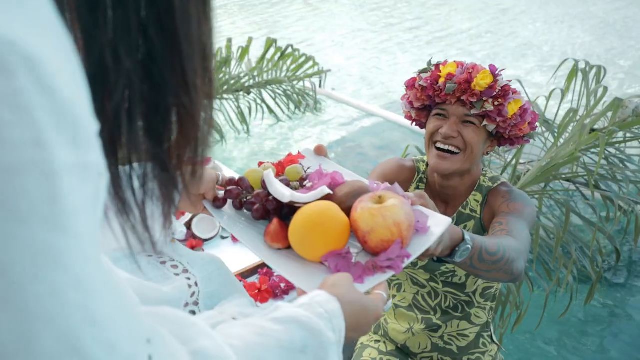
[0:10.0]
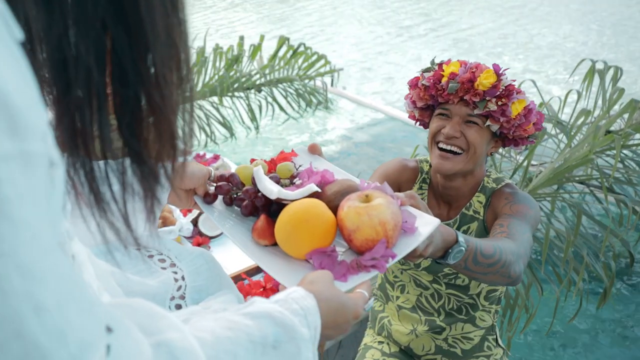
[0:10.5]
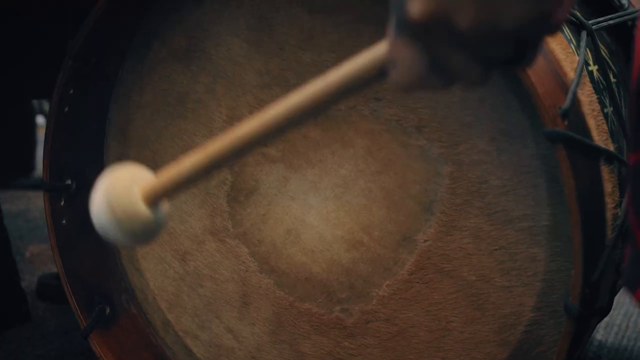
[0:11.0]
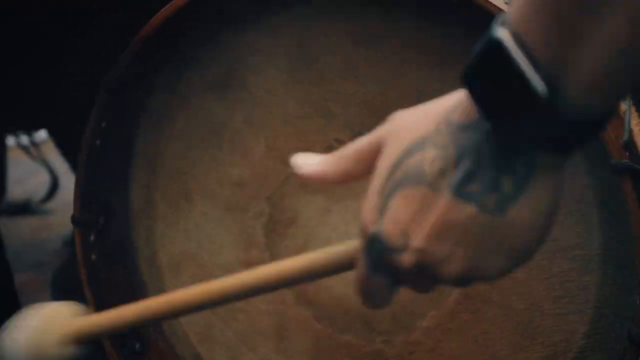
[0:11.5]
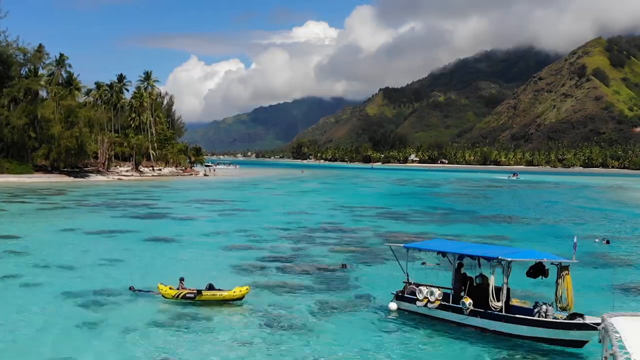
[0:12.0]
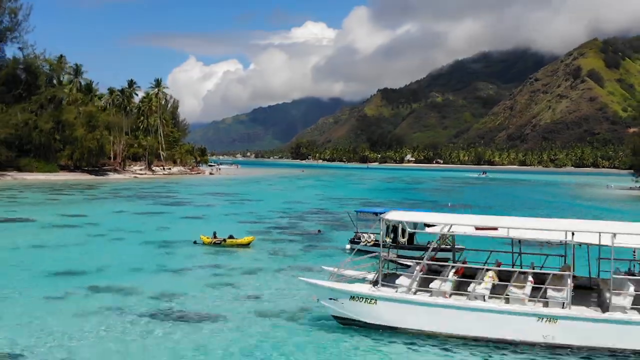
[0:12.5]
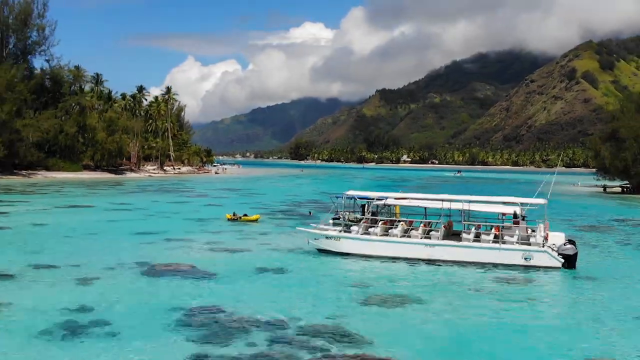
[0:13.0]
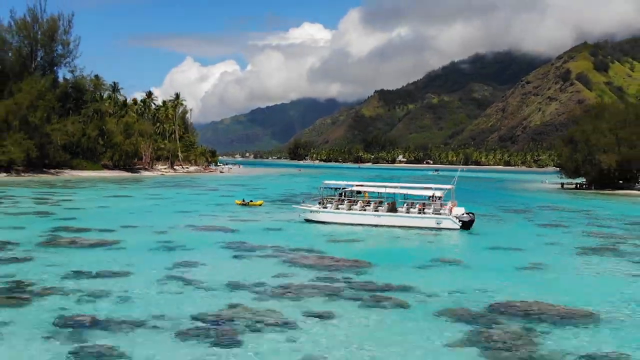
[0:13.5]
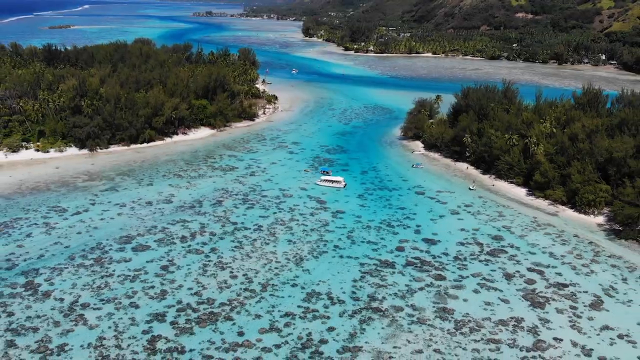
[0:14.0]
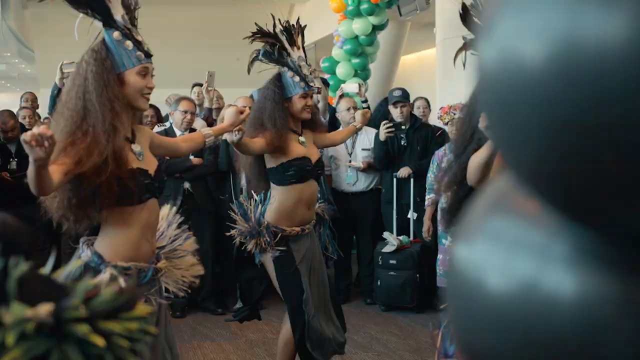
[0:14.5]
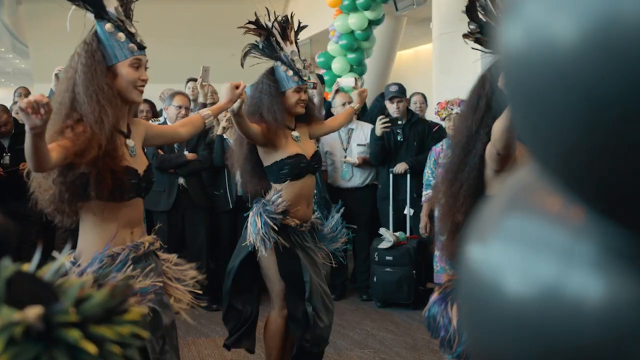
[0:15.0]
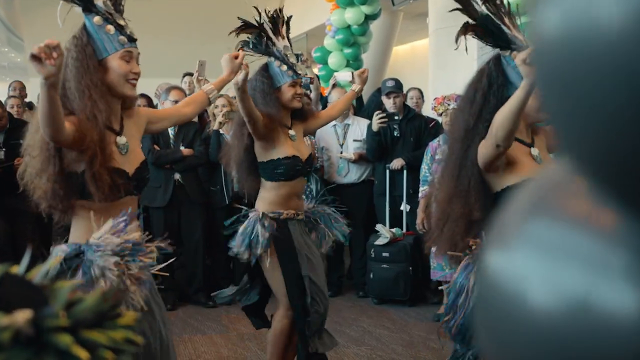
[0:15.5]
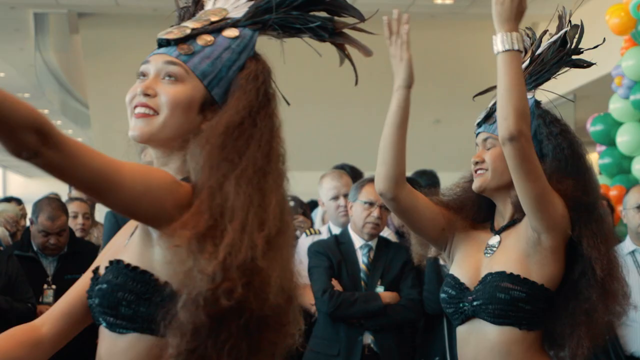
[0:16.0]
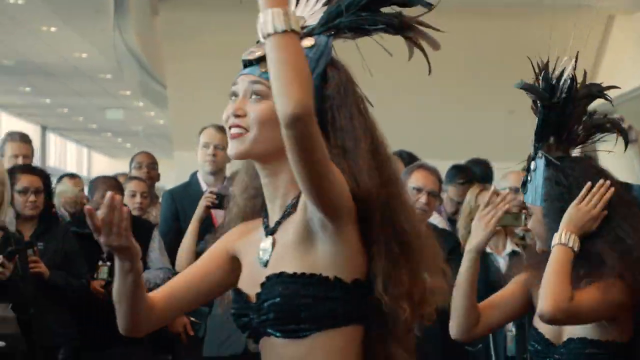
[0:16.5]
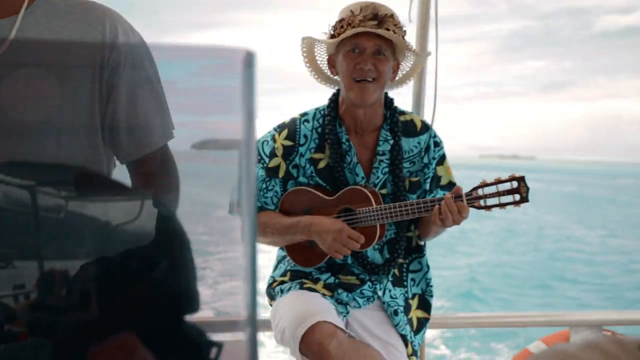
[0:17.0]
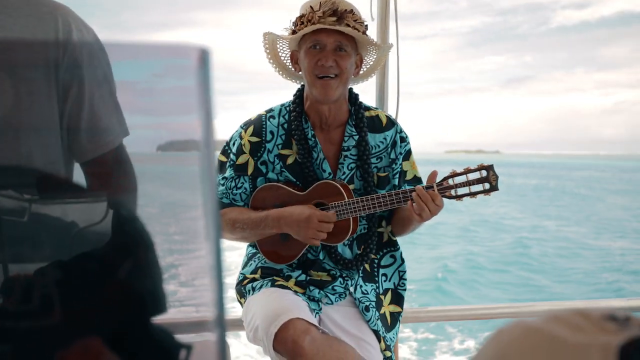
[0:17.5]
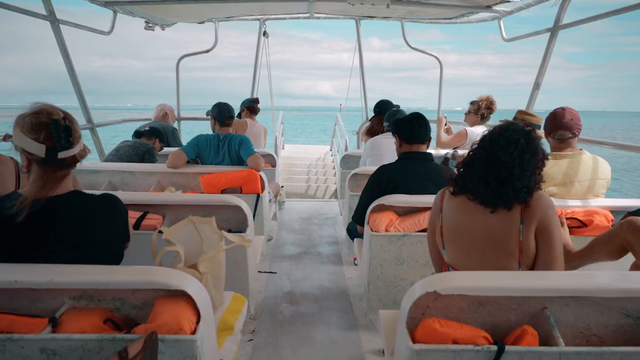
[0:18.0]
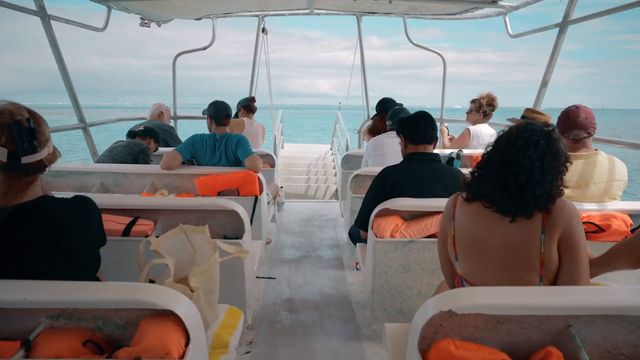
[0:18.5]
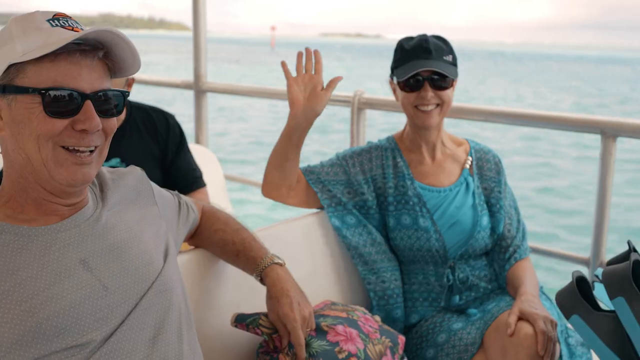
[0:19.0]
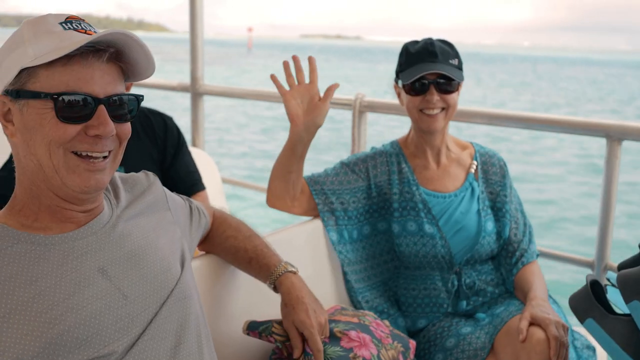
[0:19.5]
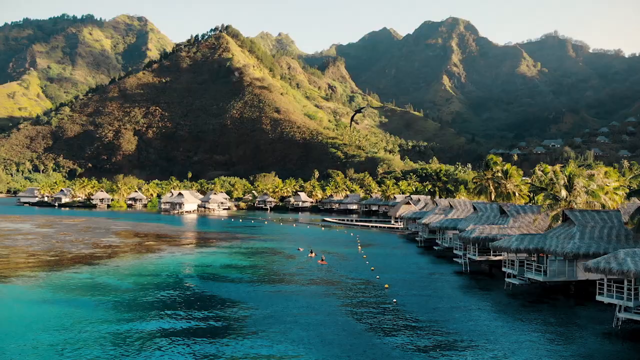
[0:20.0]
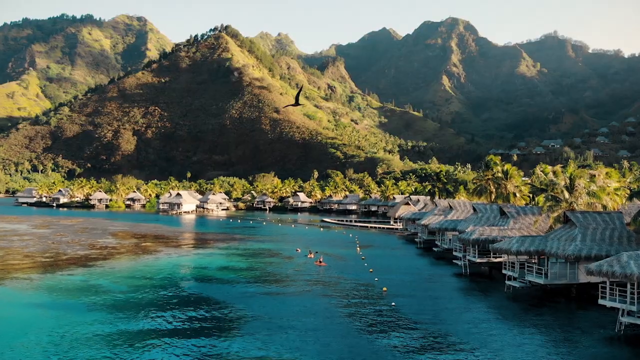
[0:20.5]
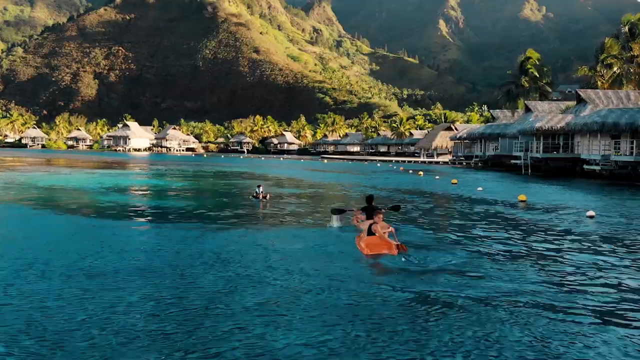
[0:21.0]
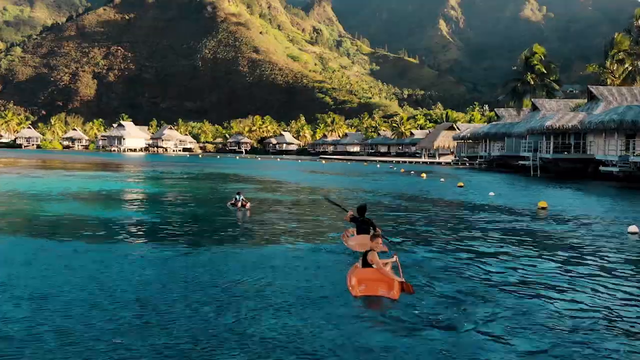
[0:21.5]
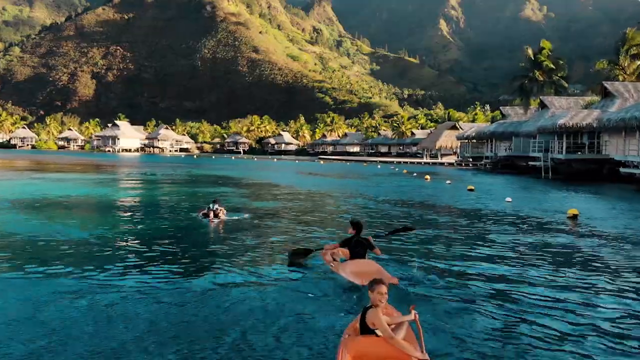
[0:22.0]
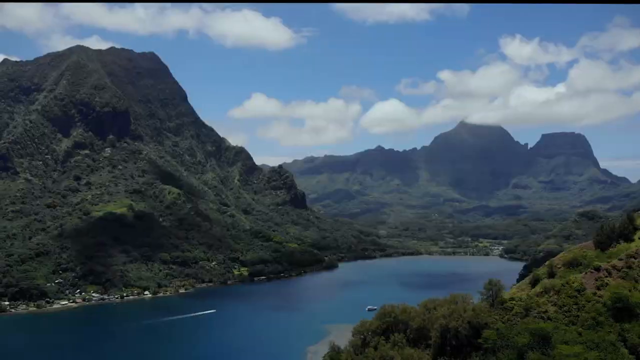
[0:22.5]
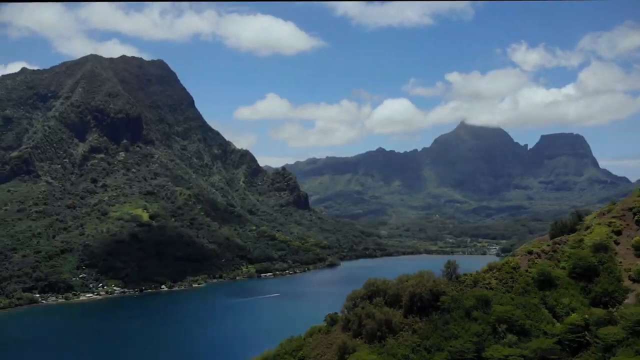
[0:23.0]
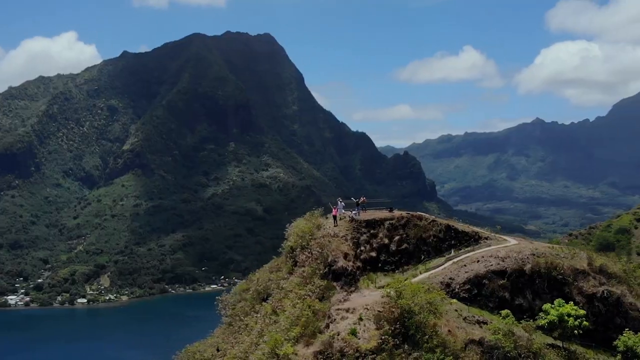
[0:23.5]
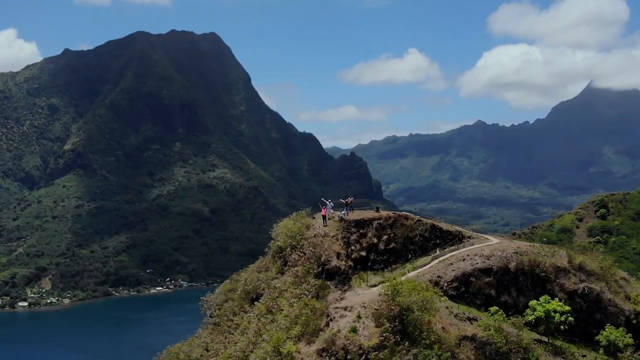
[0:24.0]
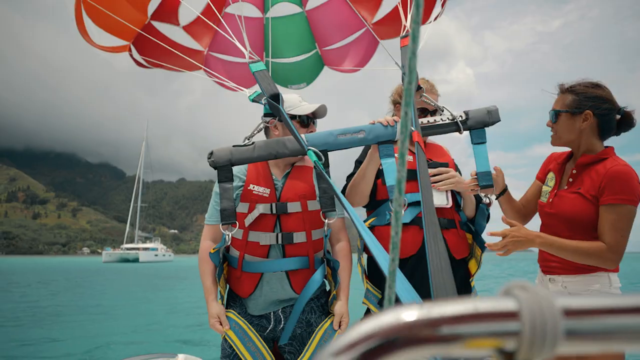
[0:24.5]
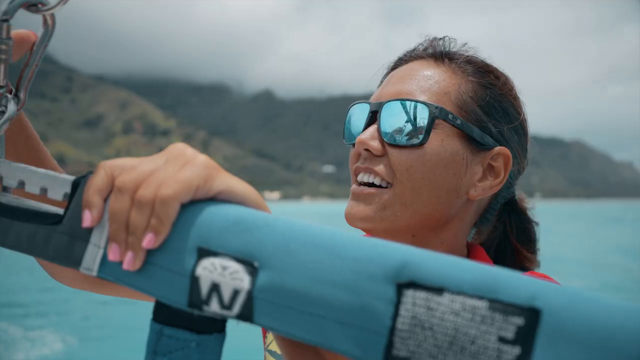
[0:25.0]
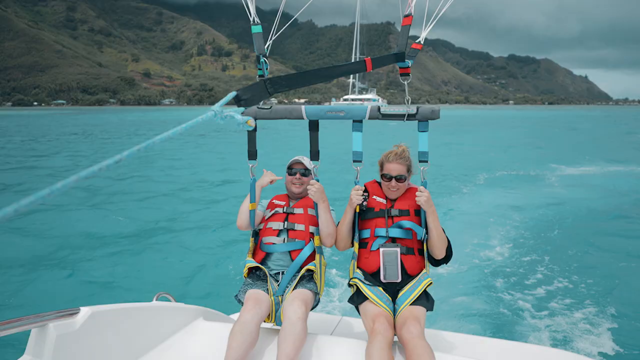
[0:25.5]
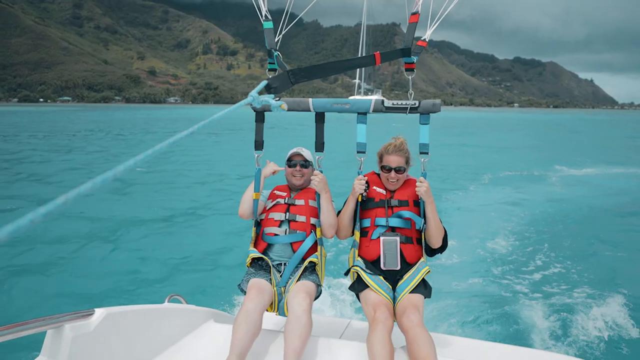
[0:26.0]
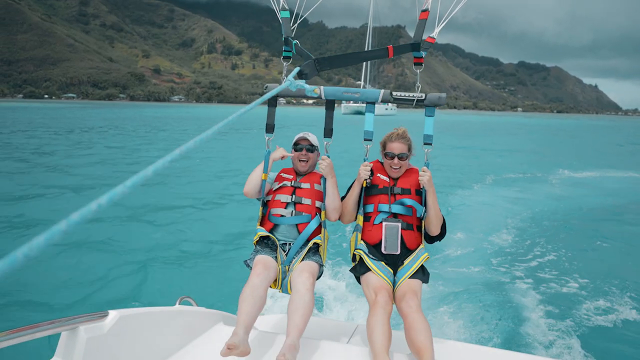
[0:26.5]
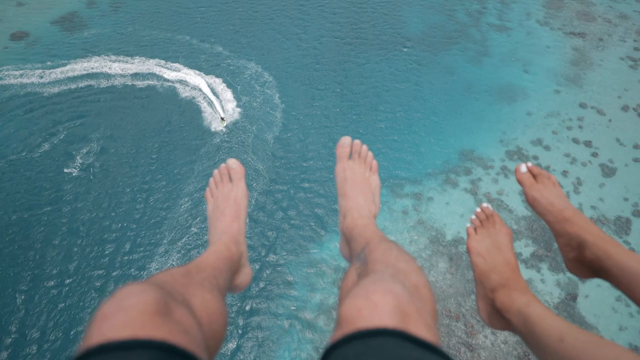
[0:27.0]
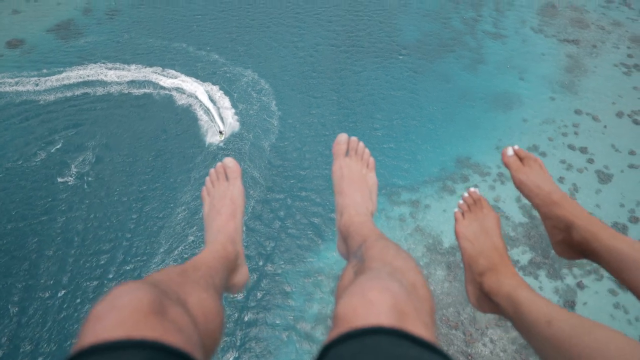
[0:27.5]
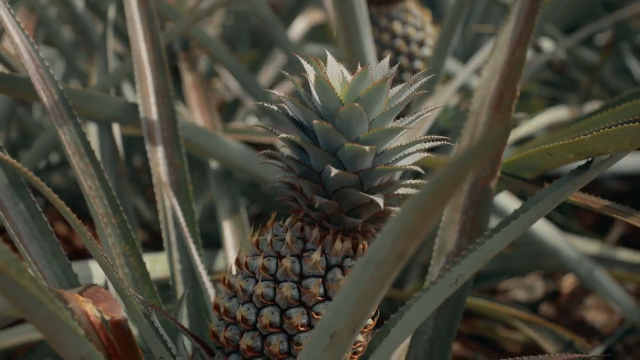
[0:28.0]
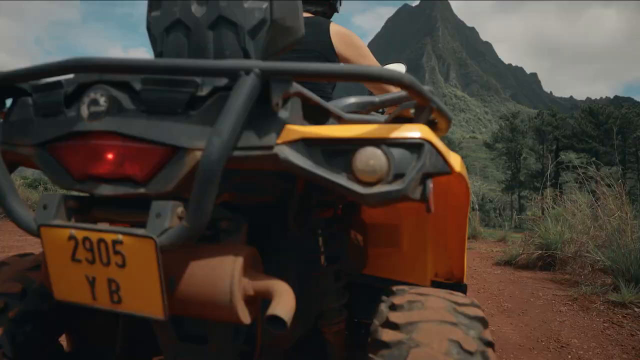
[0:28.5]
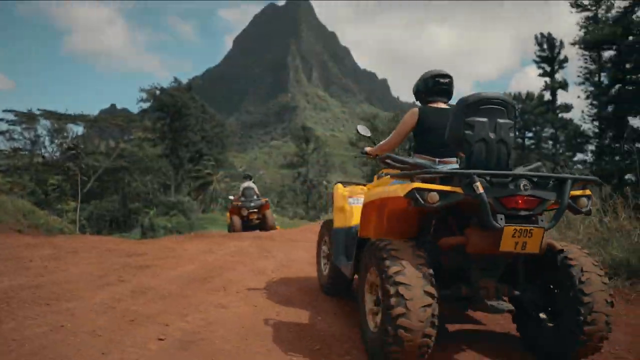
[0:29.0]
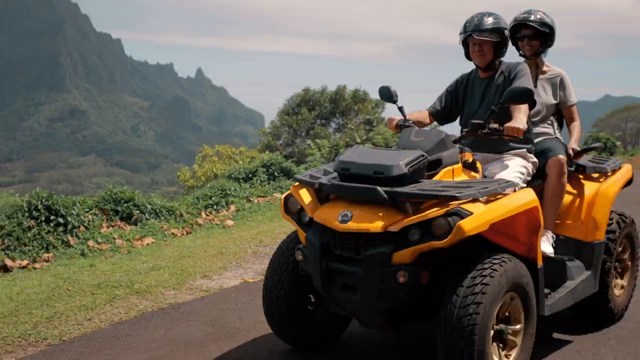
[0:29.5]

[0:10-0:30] A woman holds a platter with a bunch of fruit on it. She hands it to another woman and smiles. A person appears to be drumming or something similar. The scene transitions to a large body of crystal clear blue water with a raft in it and another boat with a blue tarp on top. Trees stand in the distance under blue skies with white clouds. The camera zooms out to show some of the boats, the water, and the overall view of the area. Some women belly dance while some men stand in the background watching, some of them recording. A smiling man wearing a Hawaiian shirt and a white hat plays a very small guitar. Some people are on a boat, and a woman waves at the camera while sitting next to a man. A bird flies in the sky, there are houses near the water, and some people are on rafts. Scenery shows a mountainous area, the water, and blue skies. Some people stand on a mountainous area, waving. People who look like they are about to go gliding or parachuting hover up in the air while a boat is in the water below. A pineapple is shown. A person rides an ATV with another person, exploring.